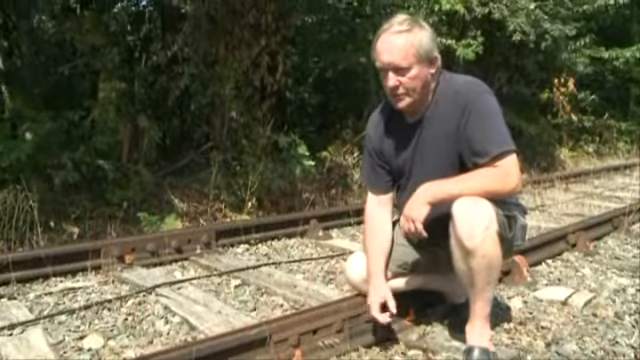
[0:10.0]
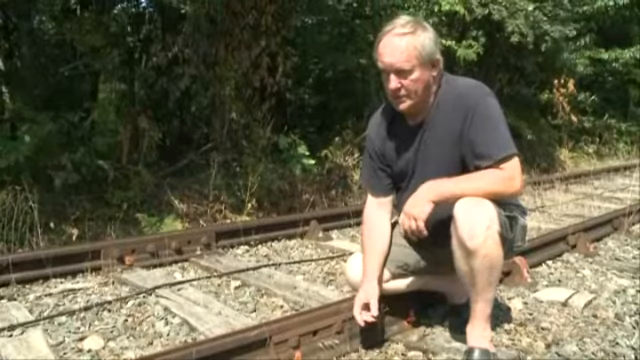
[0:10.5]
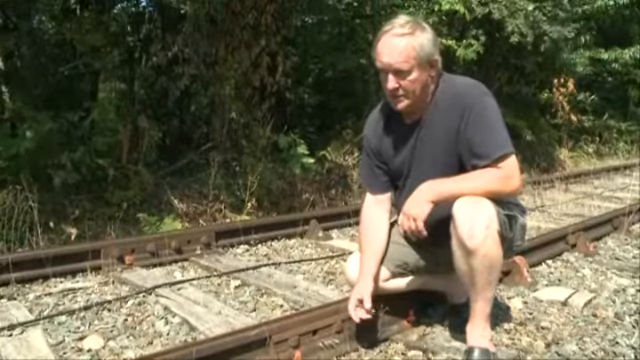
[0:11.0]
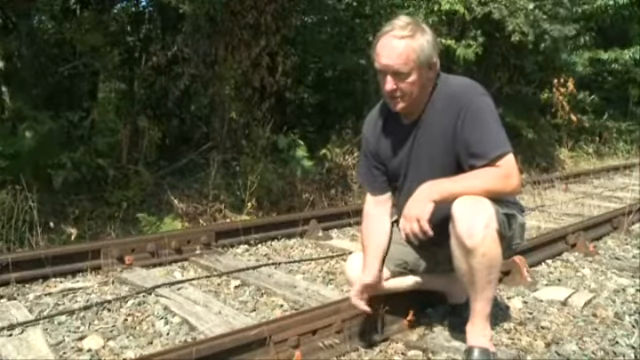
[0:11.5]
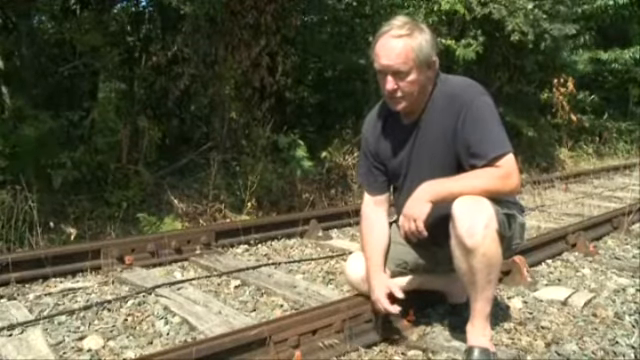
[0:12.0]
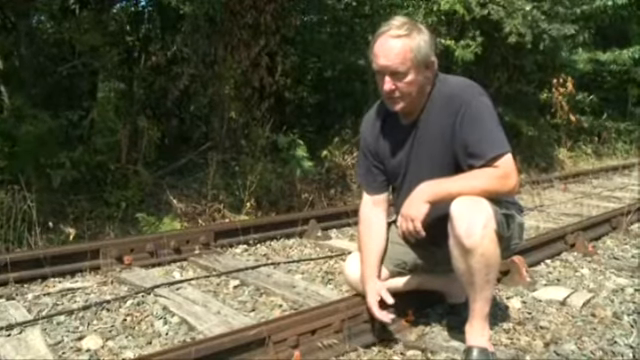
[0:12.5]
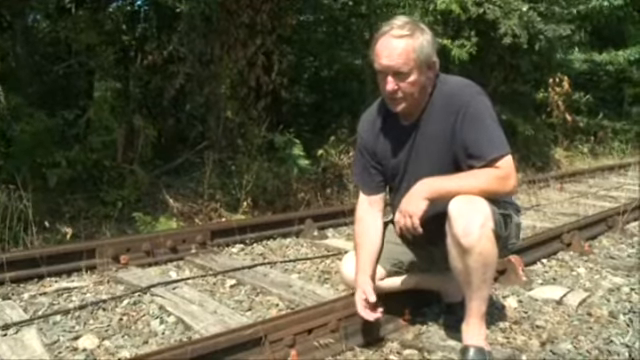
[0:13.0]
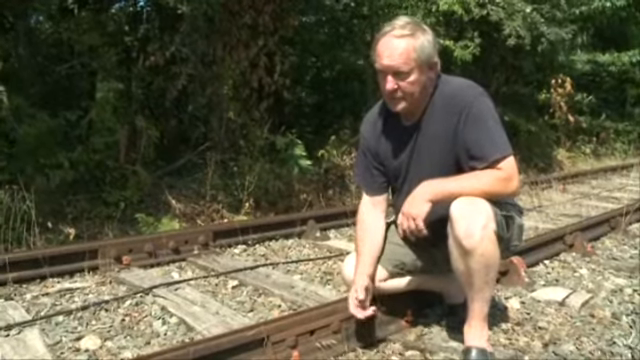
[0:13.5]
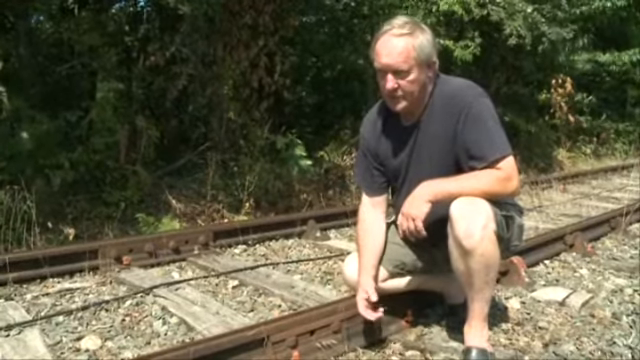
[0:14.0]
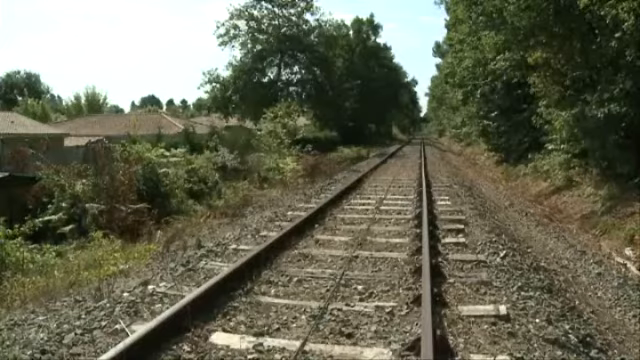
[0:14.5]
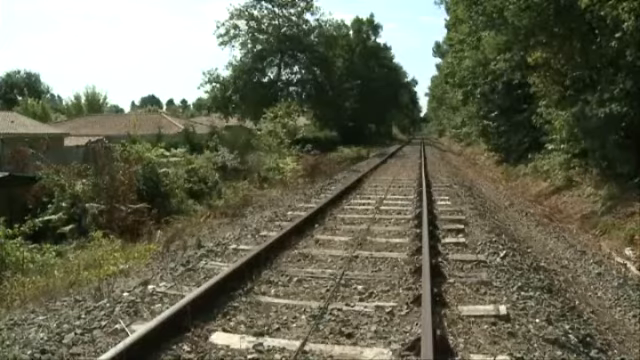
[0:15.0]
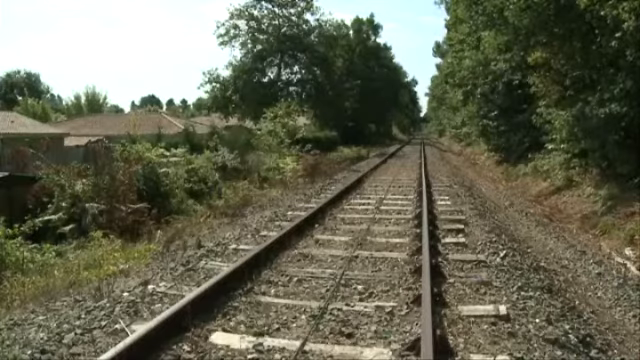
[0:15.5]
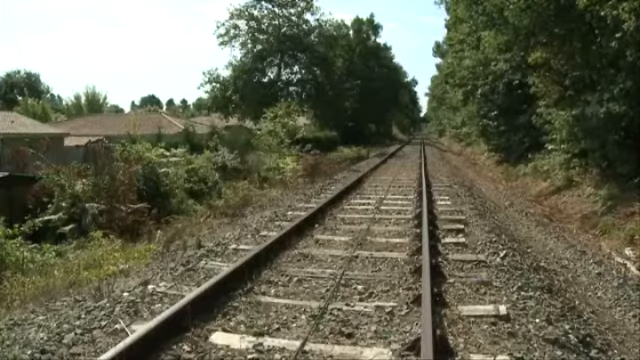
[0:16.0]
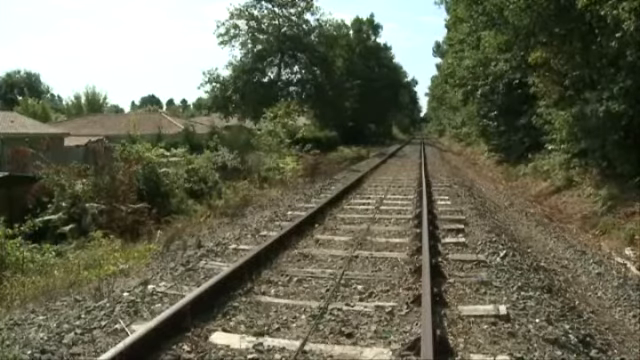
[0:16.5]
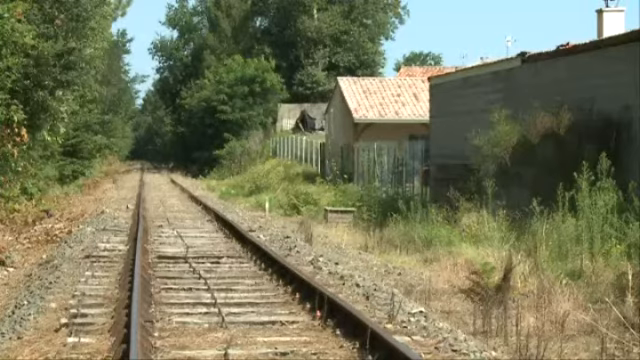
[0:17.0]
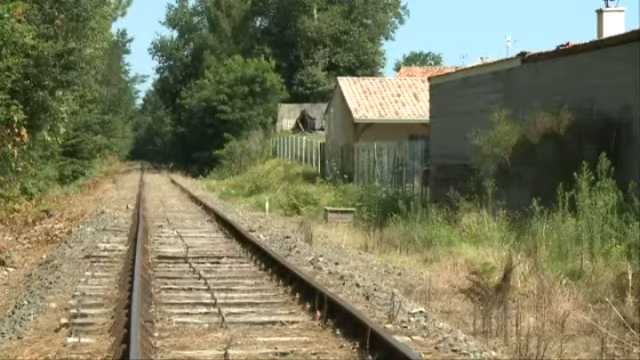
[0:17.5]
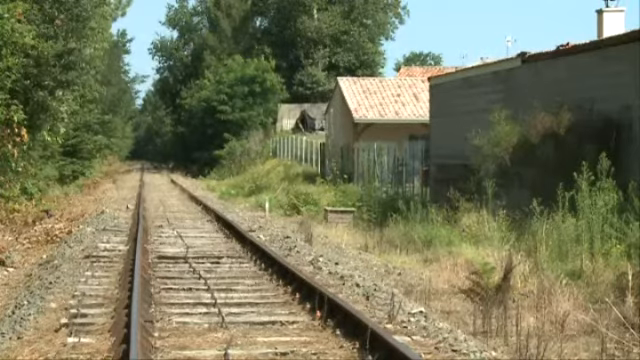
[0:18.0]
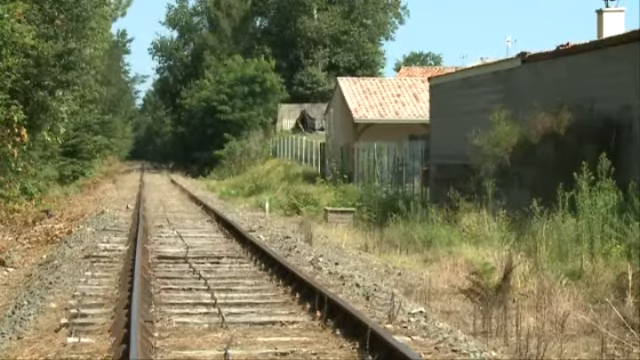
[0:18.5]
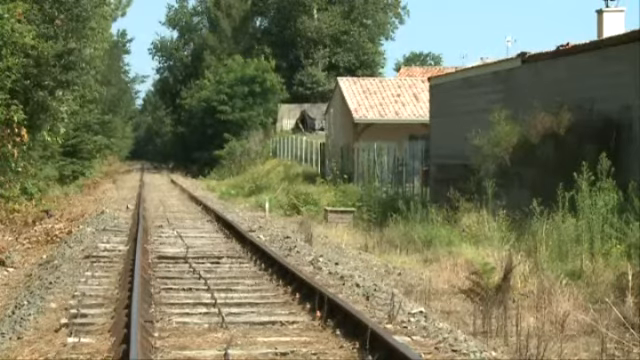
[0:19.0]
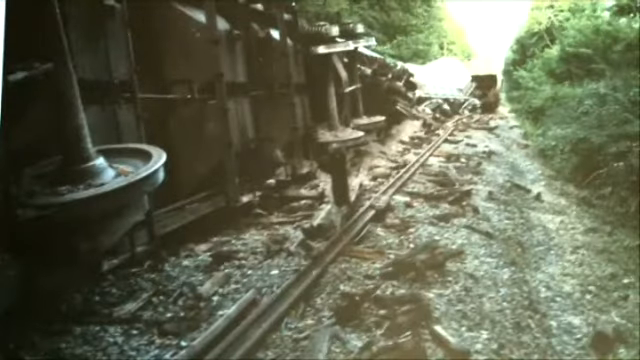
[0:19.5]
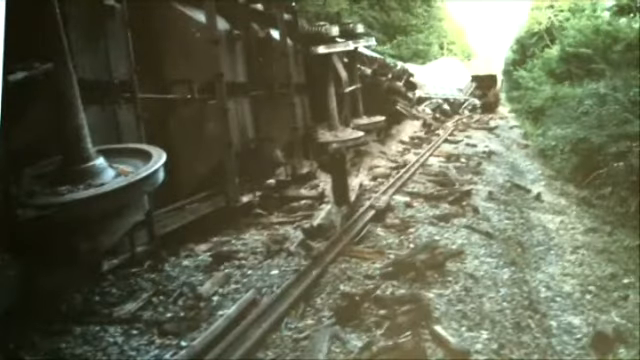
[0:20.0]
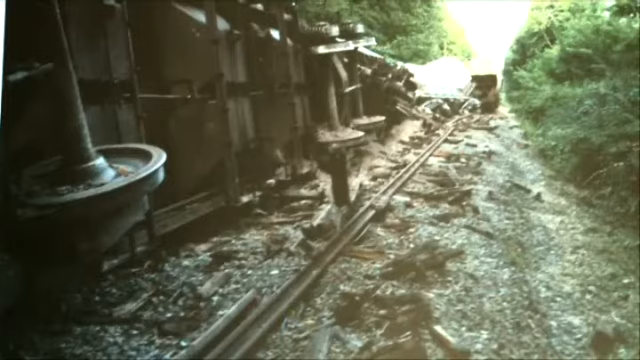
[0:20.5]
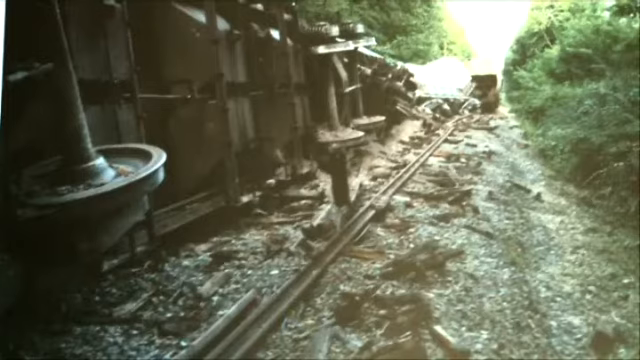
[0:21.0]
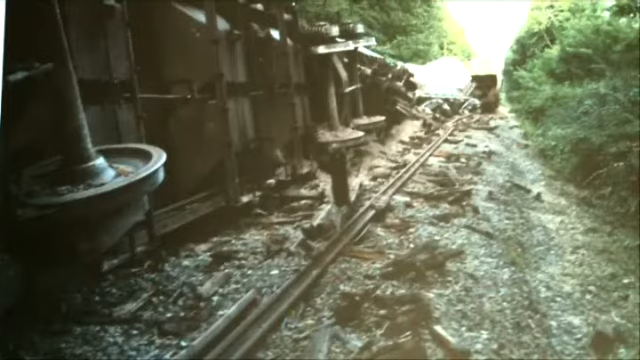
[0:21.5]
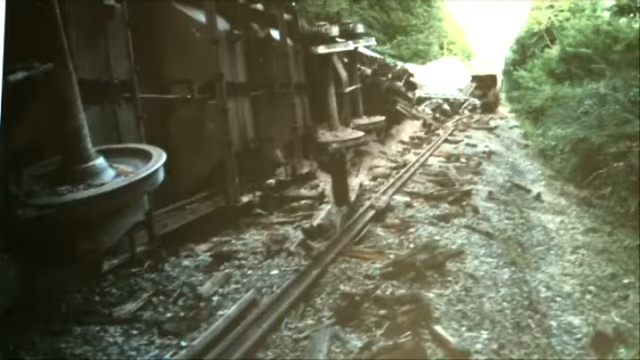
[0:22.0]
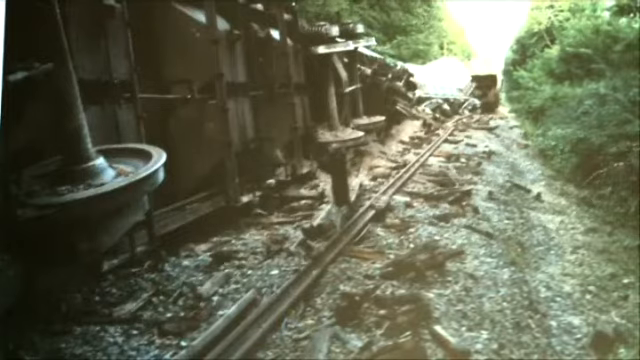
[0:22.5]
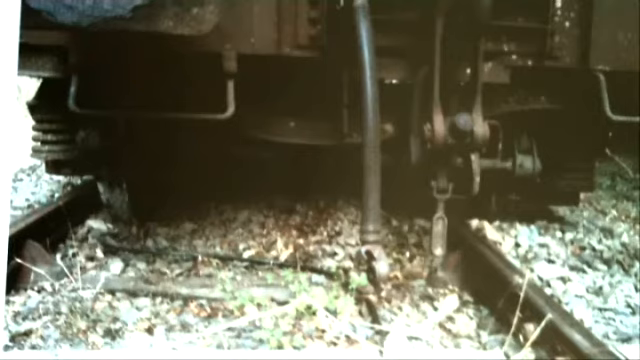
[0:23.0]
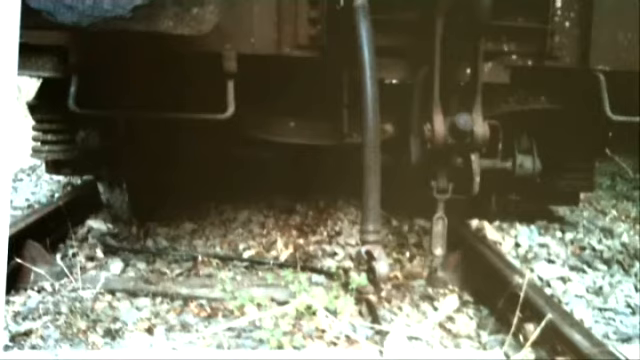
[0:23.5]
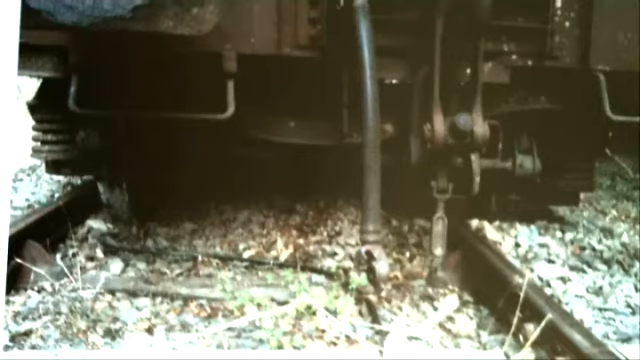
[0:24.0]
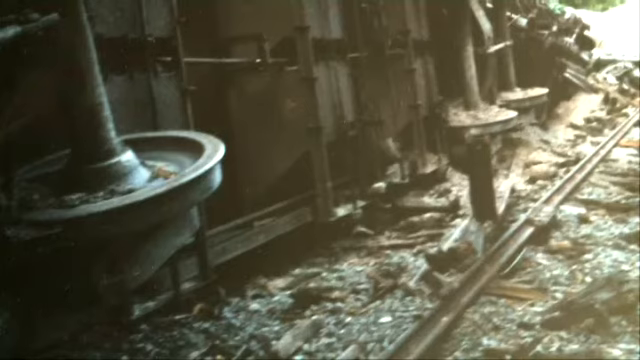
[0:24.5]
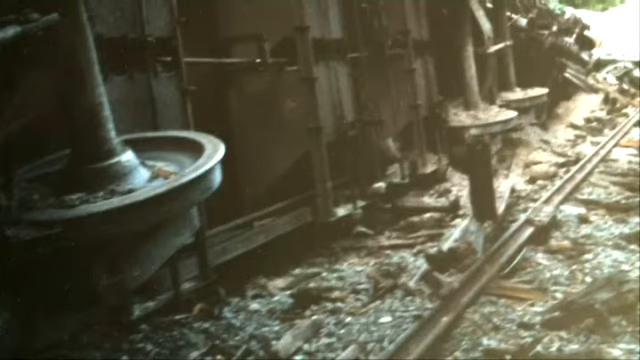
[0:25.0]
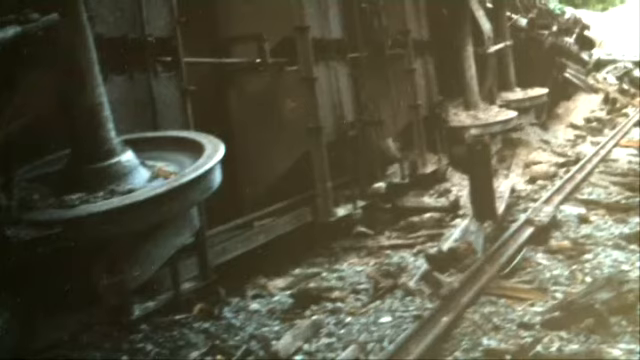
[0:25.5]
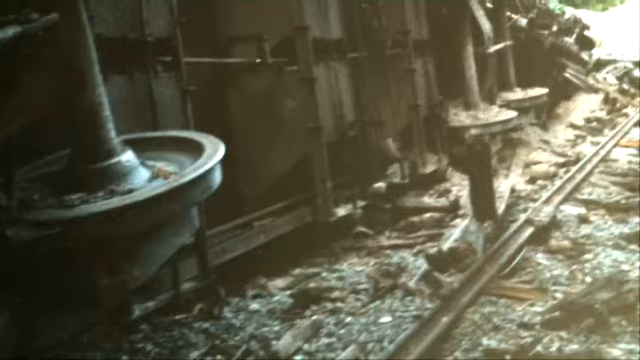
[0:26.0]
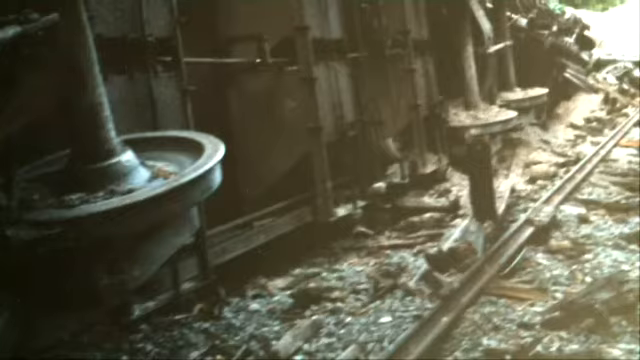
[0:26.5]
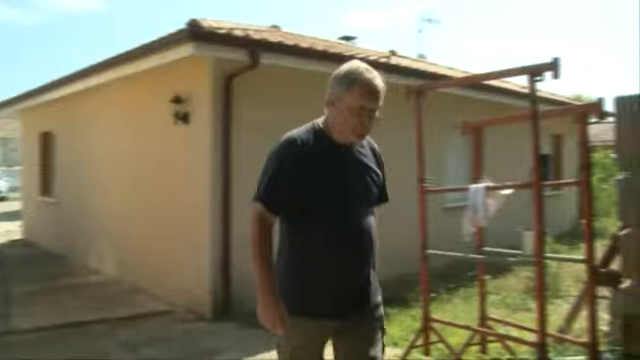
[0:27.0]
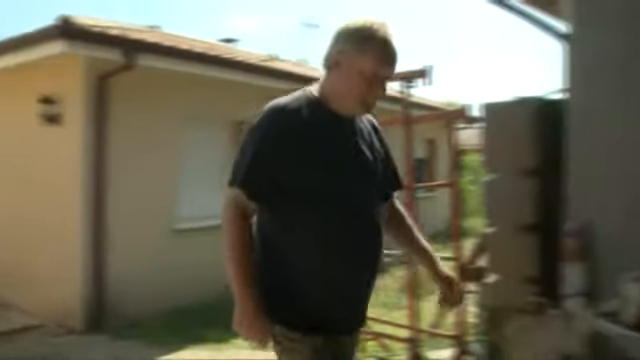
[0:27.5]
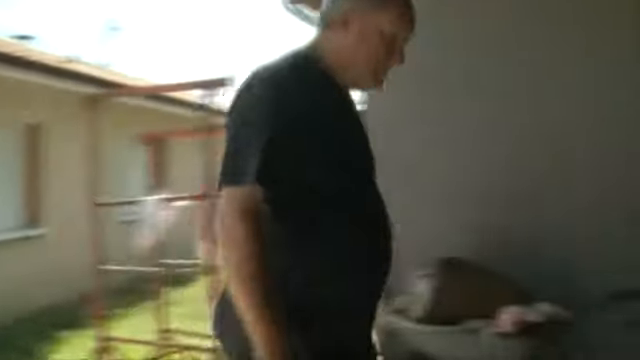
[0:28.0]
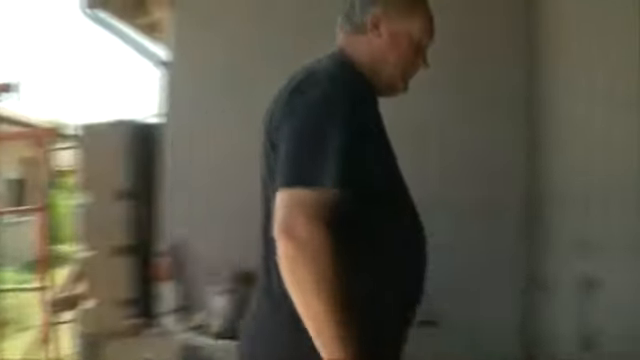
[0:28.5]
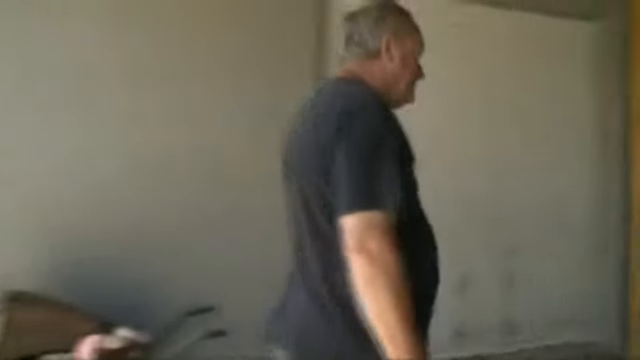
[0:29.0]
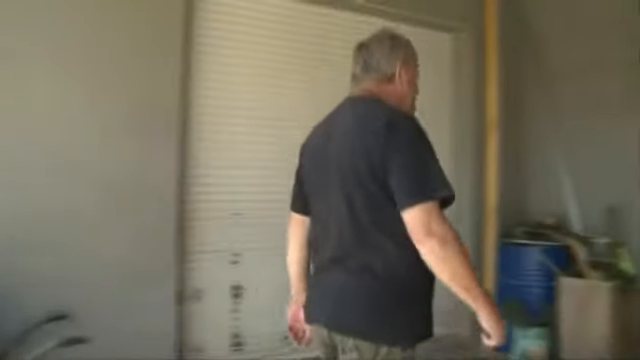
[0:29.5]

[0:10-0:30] The older man is kneeled down next to the railroad, which has gravel and rail tracks, with a green forest line behind him. The video skips ahead to a view down the railroad track, with a green forest line to the right and houses to the left, with a bit of brush behind the houses; the houses are not far from the track. There is also fencing. It then skips forward to a derailed train on its side on tracks, with rubble everywhere. These do not look like the same tracks, as there is a green forest line on both sides. The derailed train is shown from different angles. The man then walks into his garage. He is an older white man, apparently in his late 60s, with thin gray hair, wearing a faded black shirt and green shorts. The garage has gray walls, two white doors, and a single barn-door-style door into the house.